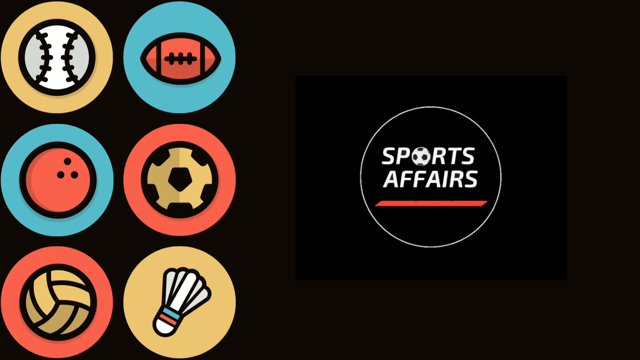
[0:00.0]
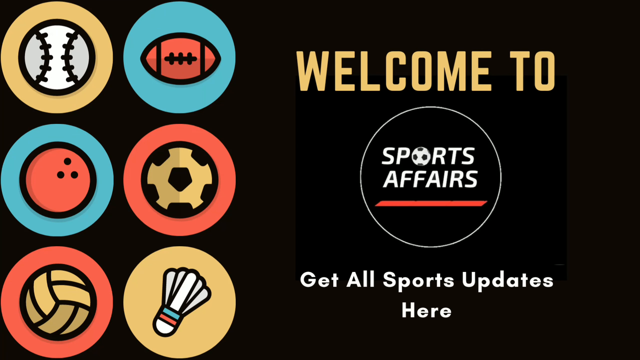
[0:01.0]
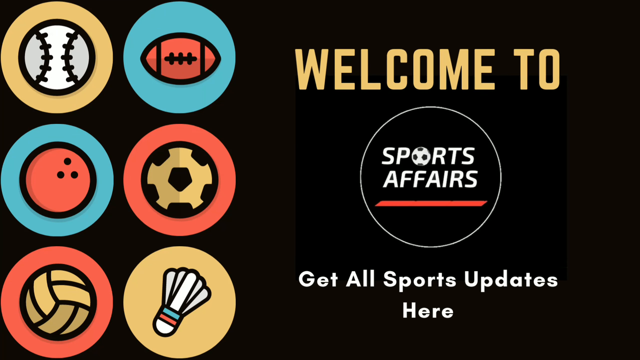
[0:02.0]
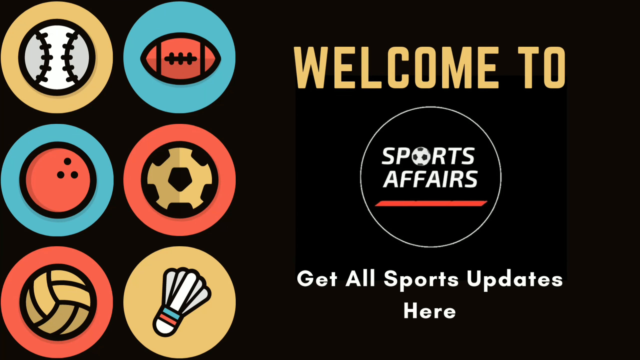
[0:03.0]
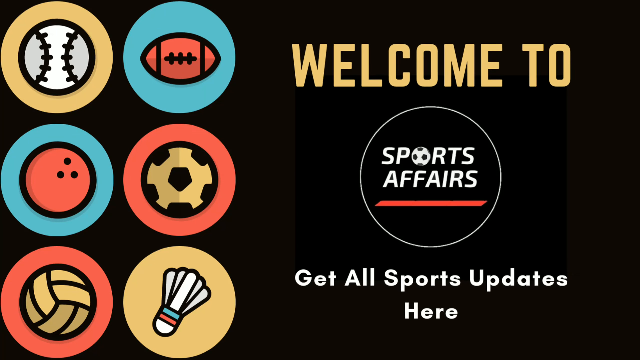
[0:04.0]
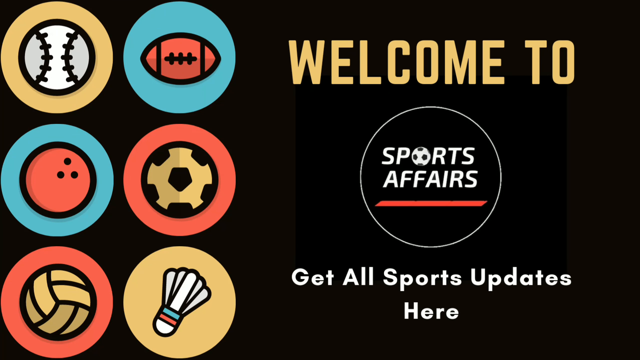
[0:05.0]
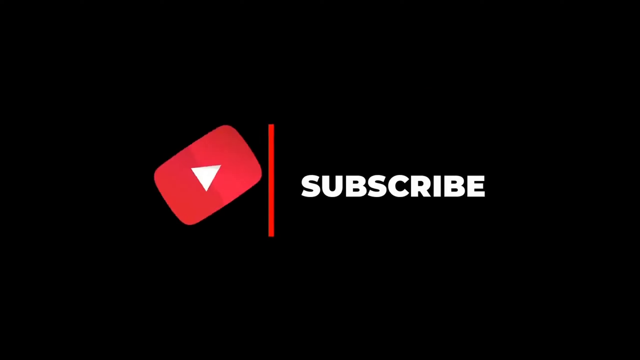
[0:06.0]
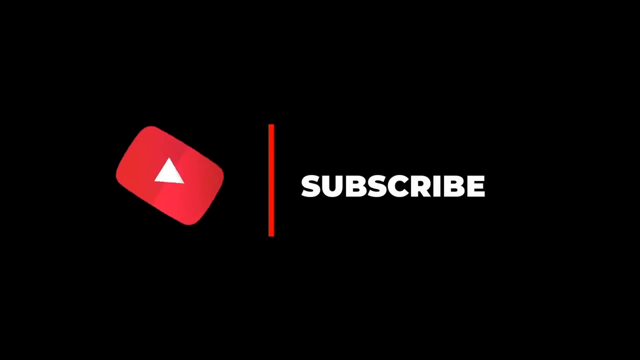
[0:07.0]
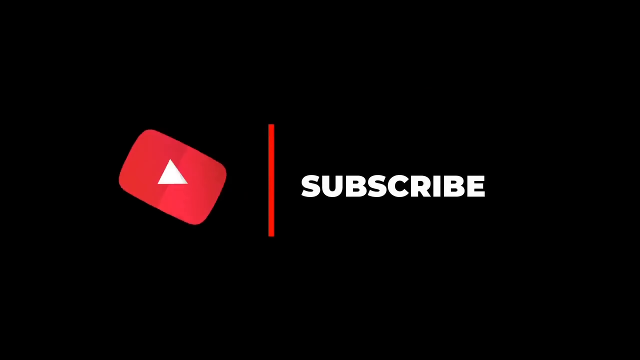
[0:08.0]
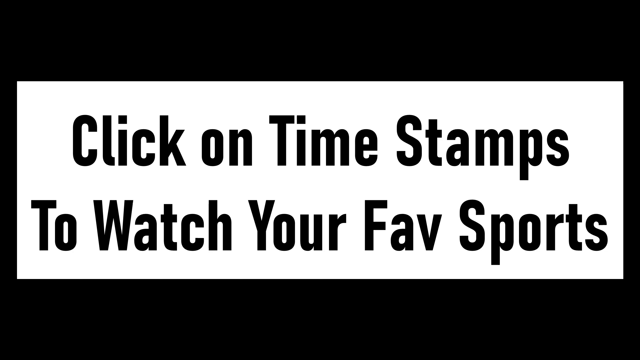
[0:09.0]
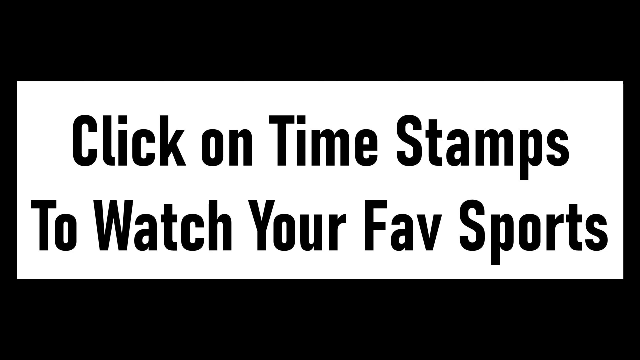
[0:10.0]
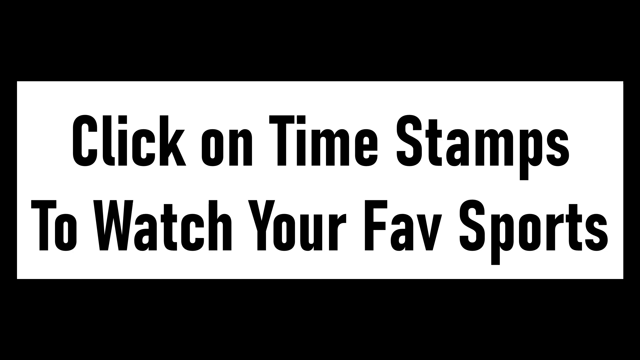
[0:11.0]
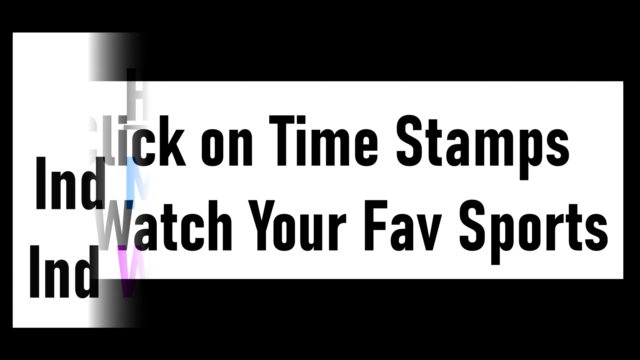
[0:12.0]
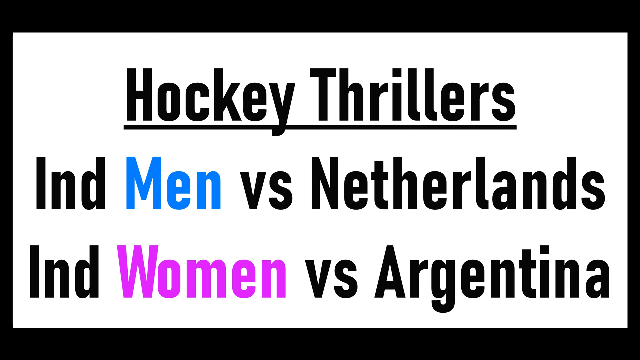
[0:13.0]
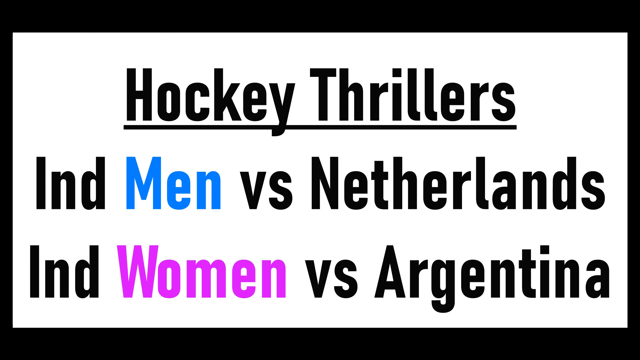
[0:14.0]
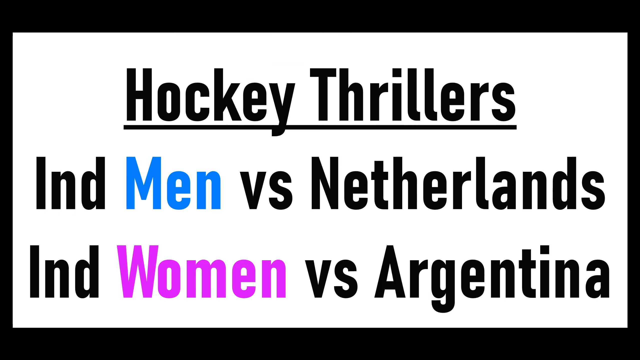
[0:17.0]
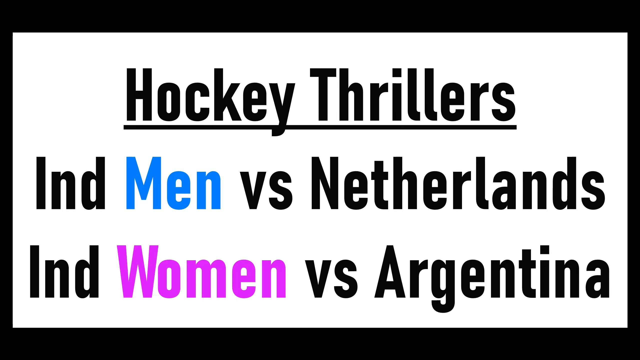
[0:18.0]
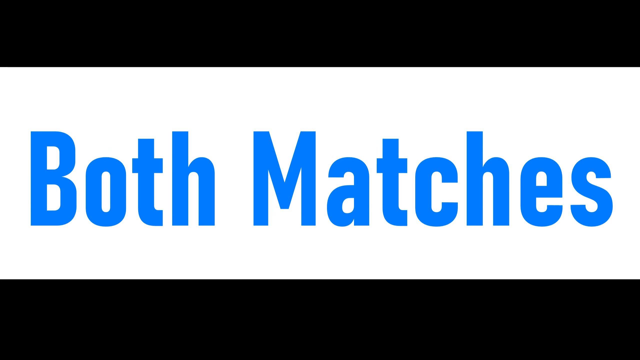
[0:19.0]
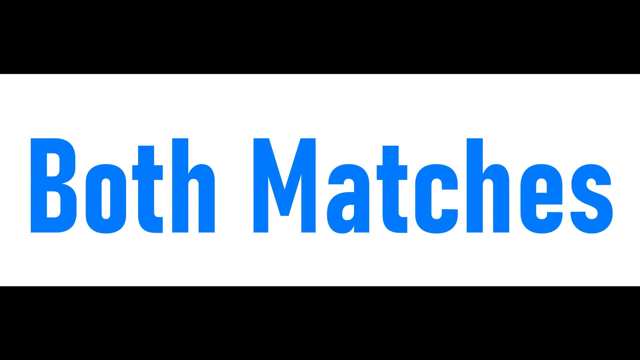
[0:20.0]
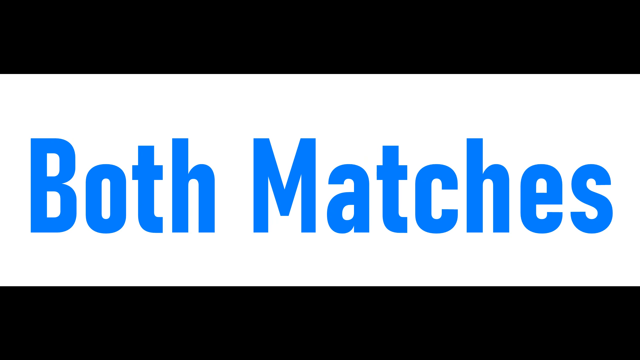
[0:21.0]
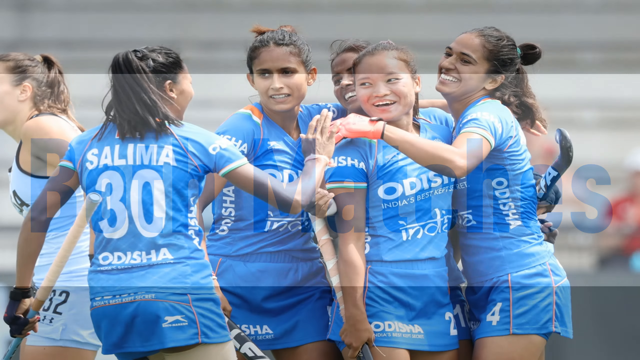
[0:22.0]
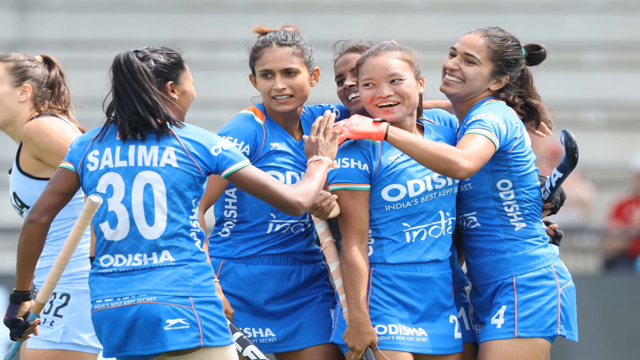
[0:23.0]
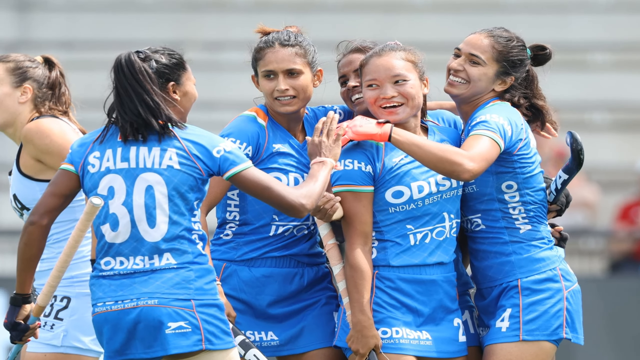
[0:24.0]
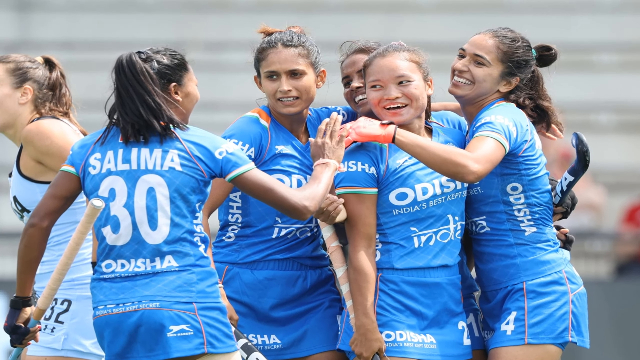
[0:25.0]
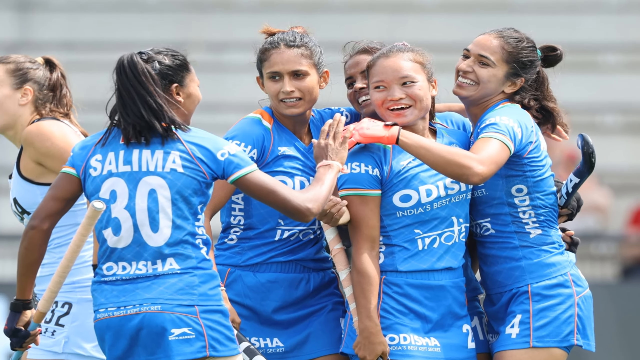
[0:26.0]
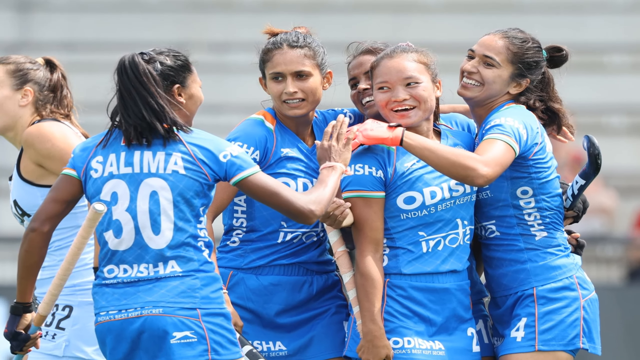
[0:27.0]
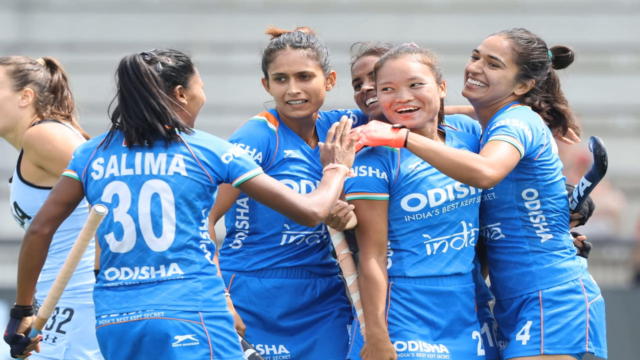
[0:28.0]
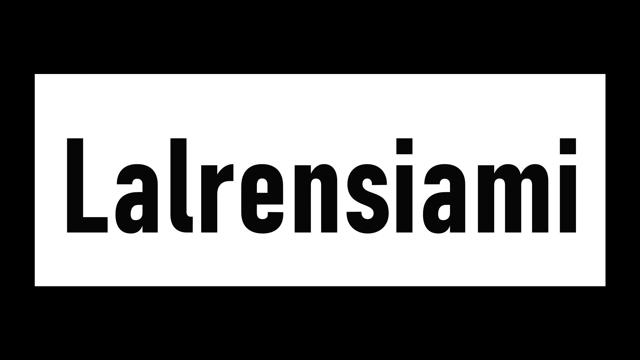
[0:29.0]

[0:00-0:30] A black background opens the video with colored circles, each holding a different type of sports ball: a baseball, a football, a bowling ball, a soccer ball, a volleyball, and a badminton item whose name is not given. The screen then goes black with the word "subscribe" and the YouTube symbol. Headlines begin popping up on the screen. One reads "click on timestamps to watch your fave sports" in black type on a white background. Next comes "Hockey thrillers IND men versus Netherlands, IND women versus Argentina"; "men" is in blue font, "women" in purple, and all other text in black. The screen then flashes to "both matches" in blue writing, followed by a picture of what looks like a women's sports team, all wearing blue jerseys.